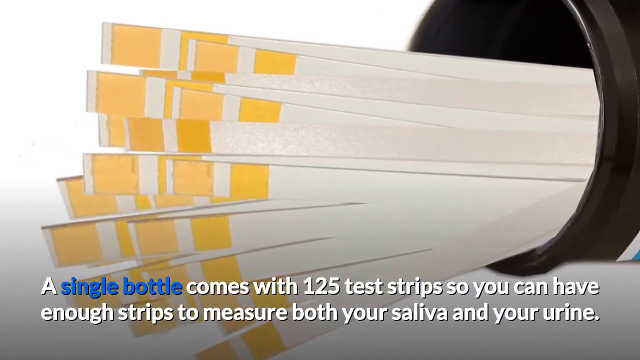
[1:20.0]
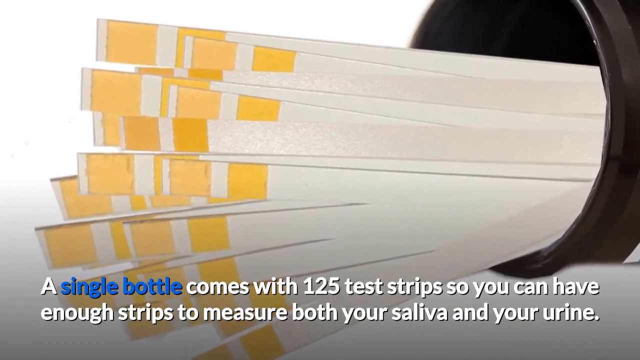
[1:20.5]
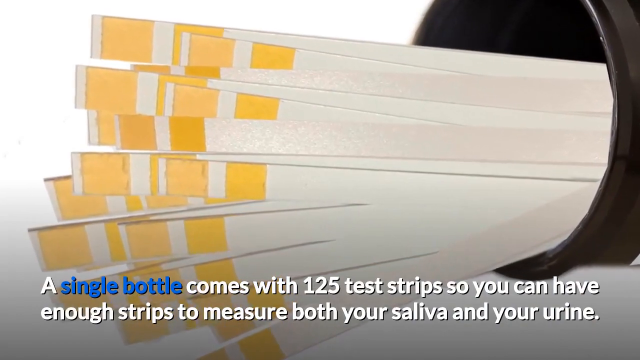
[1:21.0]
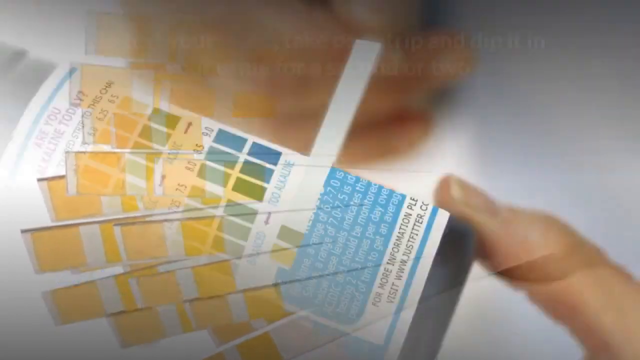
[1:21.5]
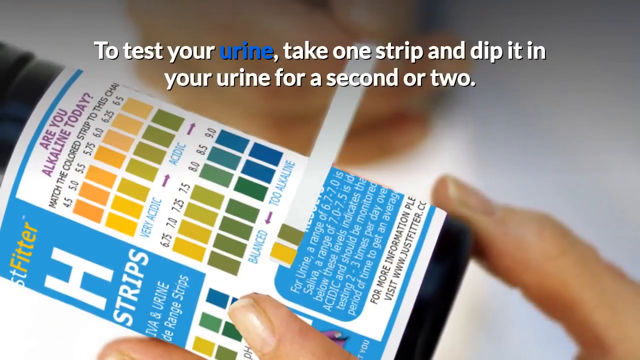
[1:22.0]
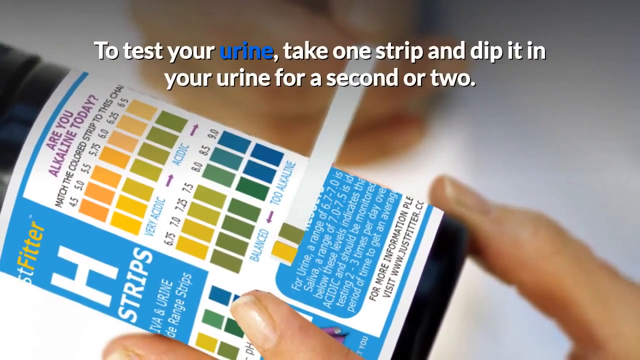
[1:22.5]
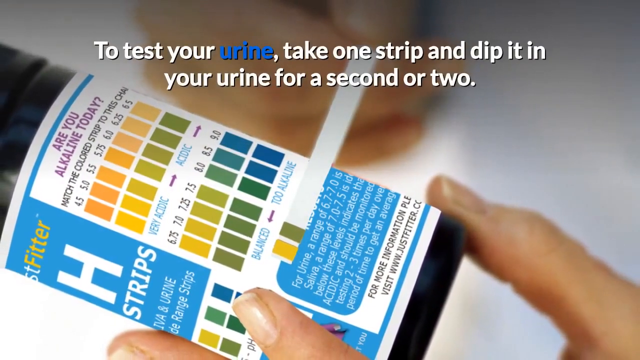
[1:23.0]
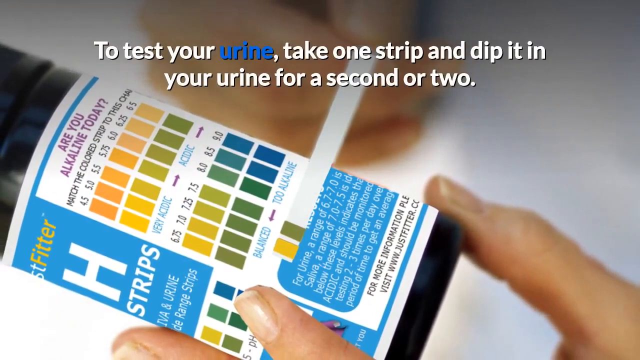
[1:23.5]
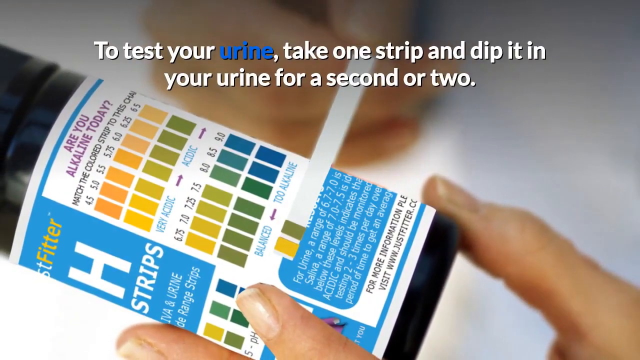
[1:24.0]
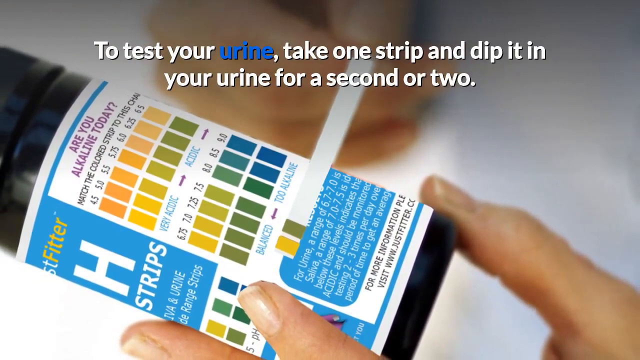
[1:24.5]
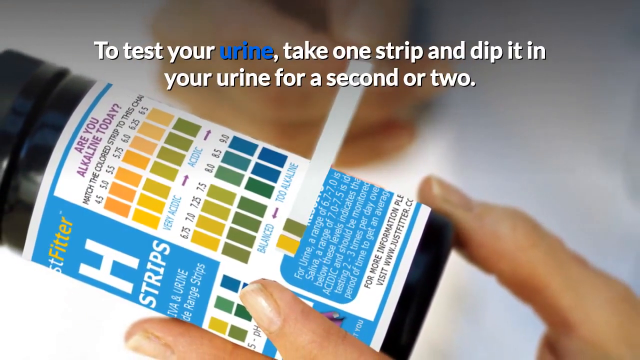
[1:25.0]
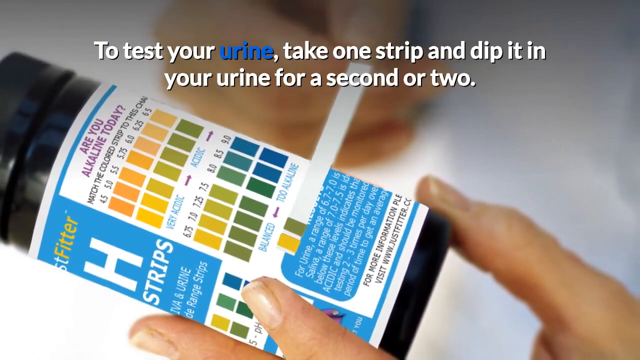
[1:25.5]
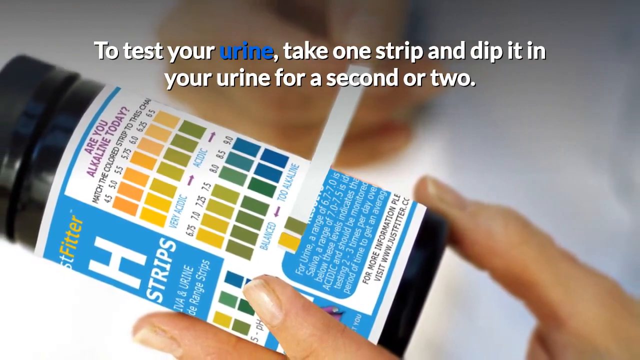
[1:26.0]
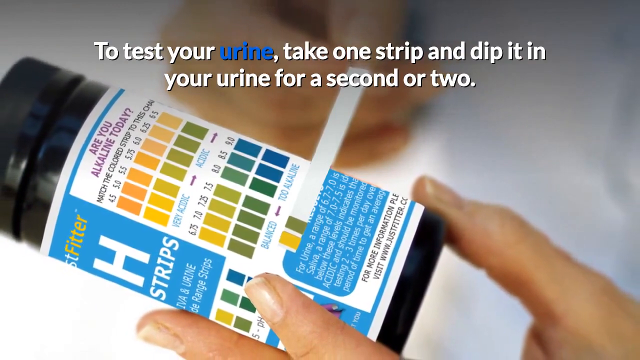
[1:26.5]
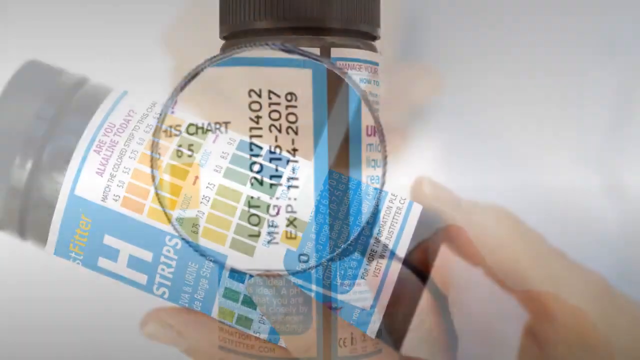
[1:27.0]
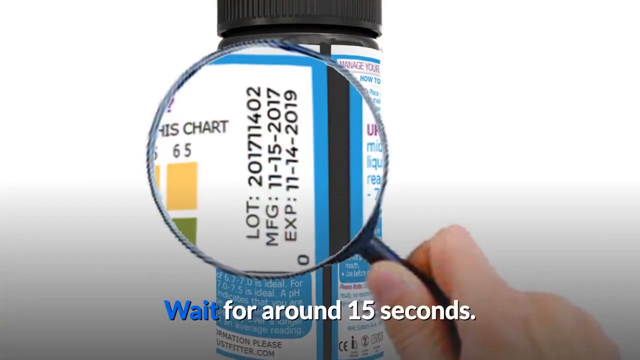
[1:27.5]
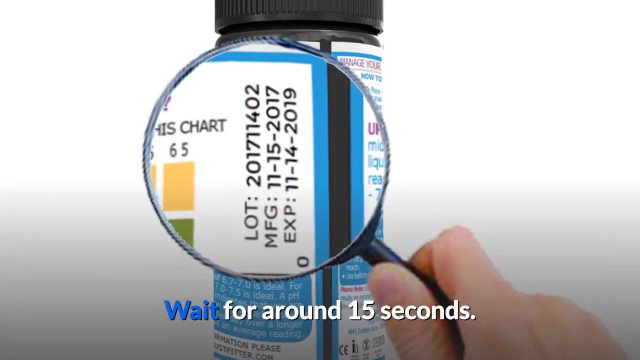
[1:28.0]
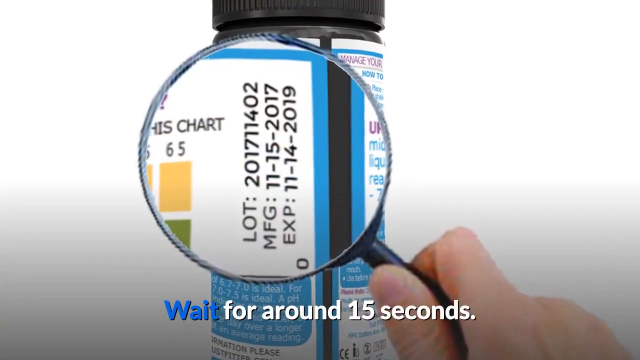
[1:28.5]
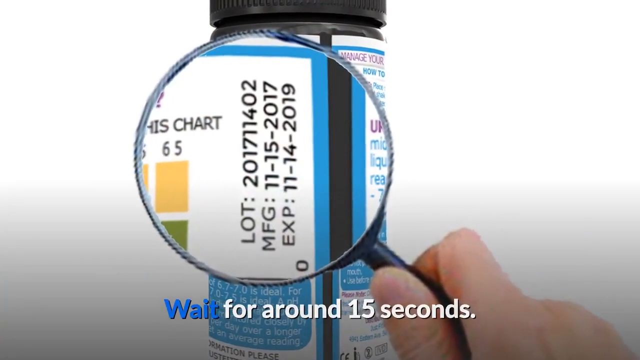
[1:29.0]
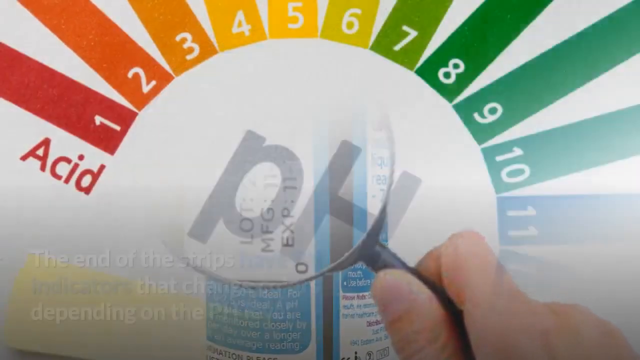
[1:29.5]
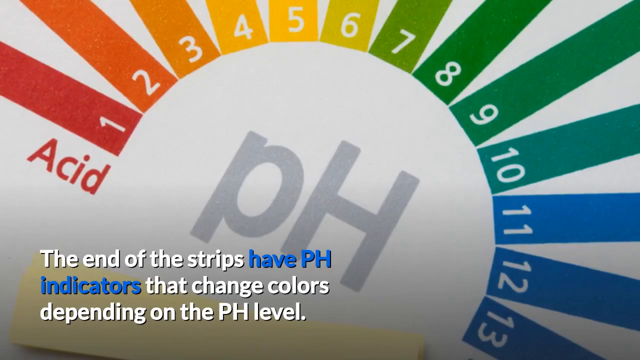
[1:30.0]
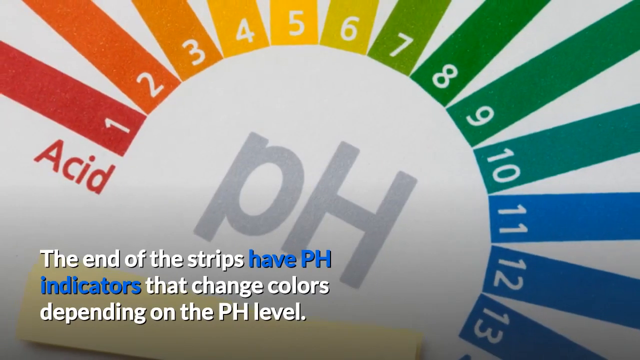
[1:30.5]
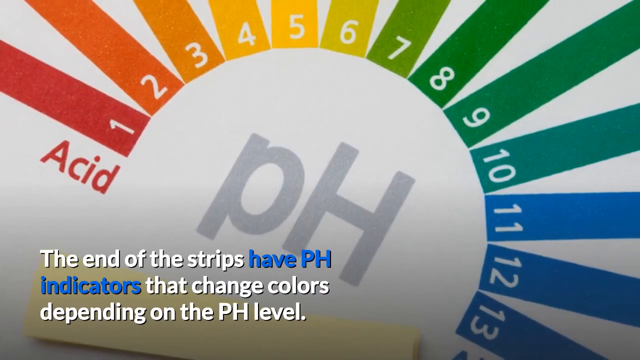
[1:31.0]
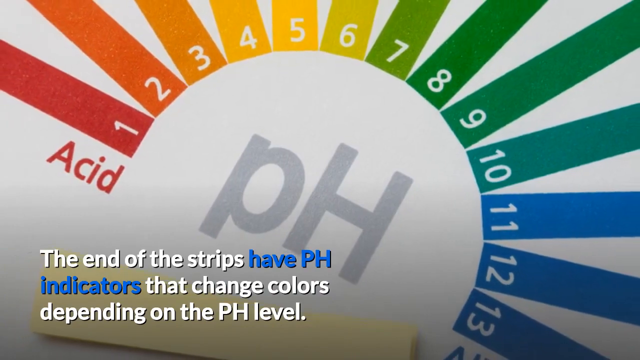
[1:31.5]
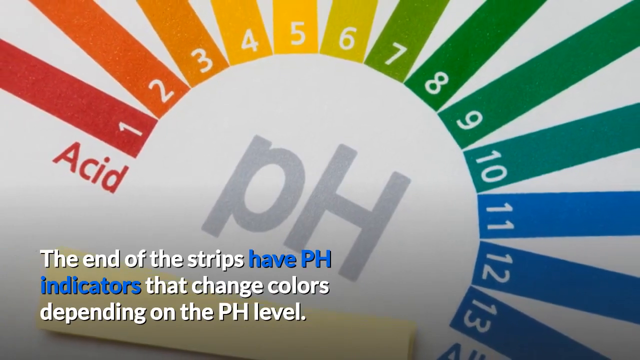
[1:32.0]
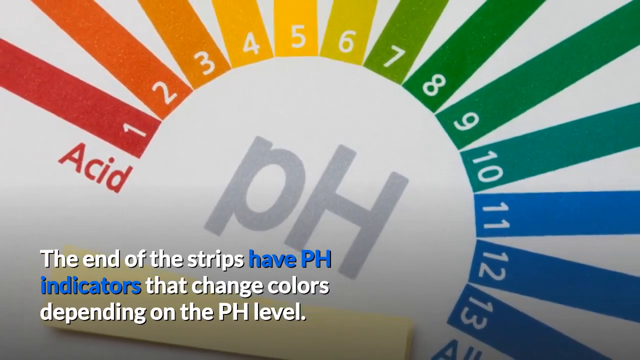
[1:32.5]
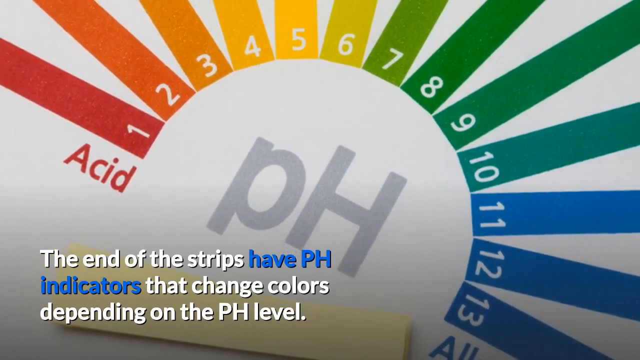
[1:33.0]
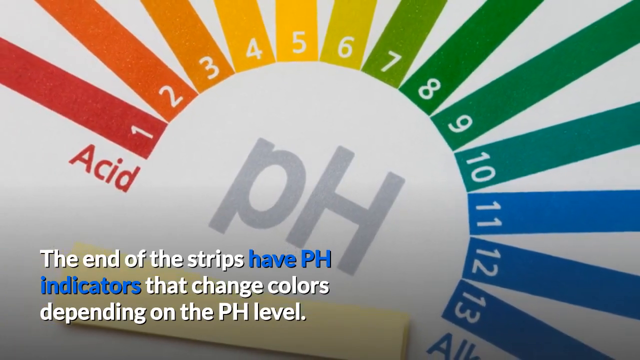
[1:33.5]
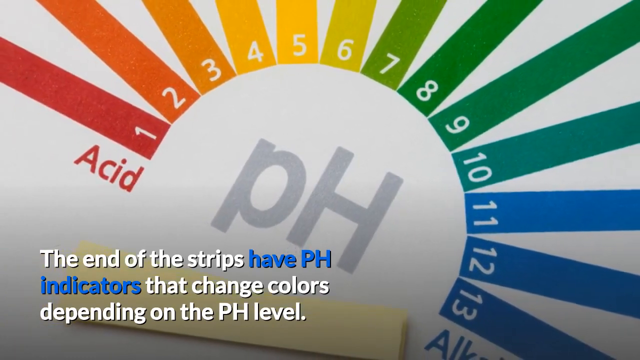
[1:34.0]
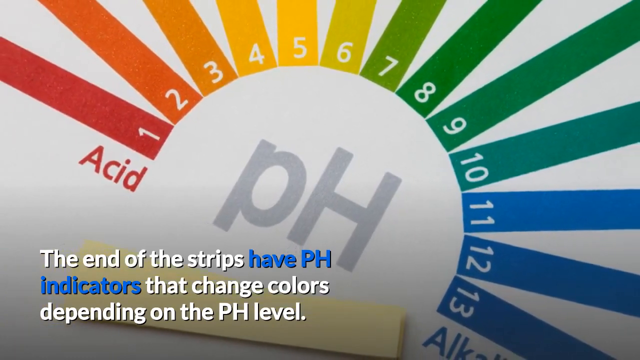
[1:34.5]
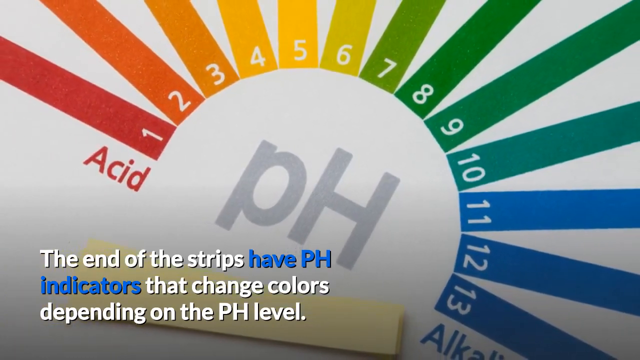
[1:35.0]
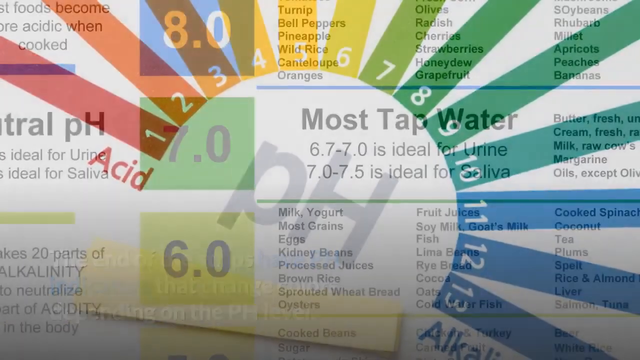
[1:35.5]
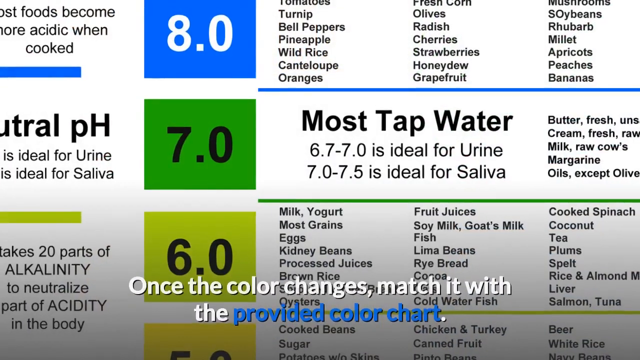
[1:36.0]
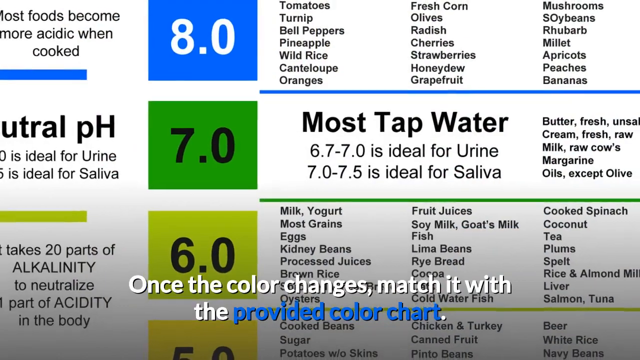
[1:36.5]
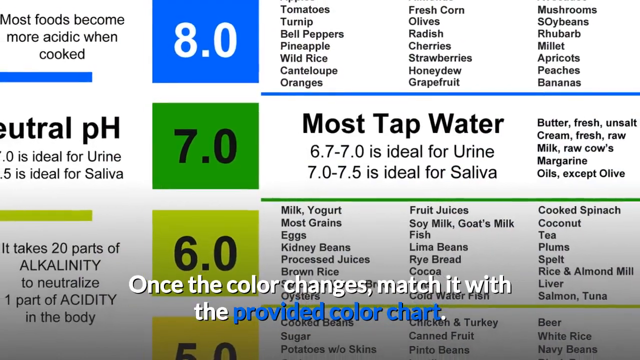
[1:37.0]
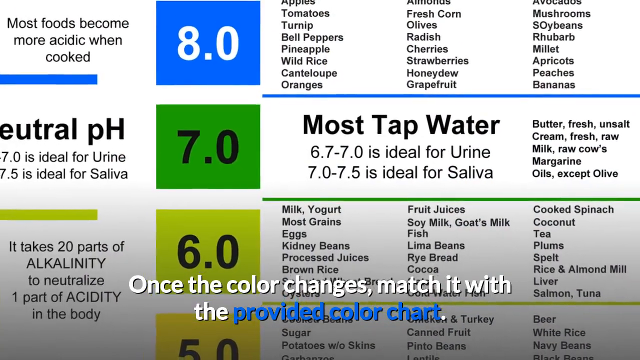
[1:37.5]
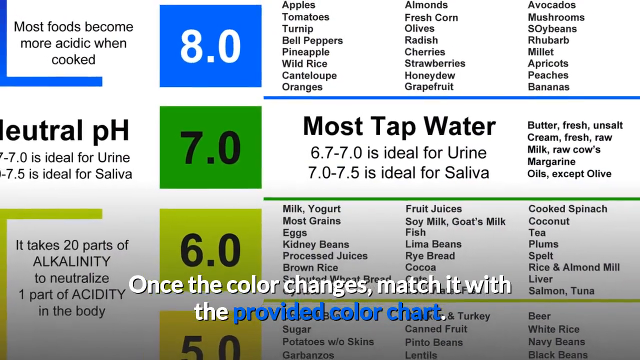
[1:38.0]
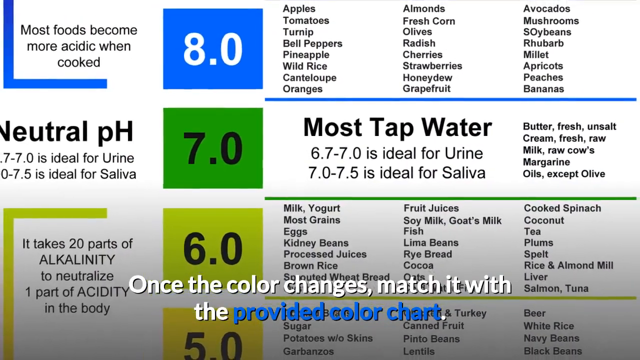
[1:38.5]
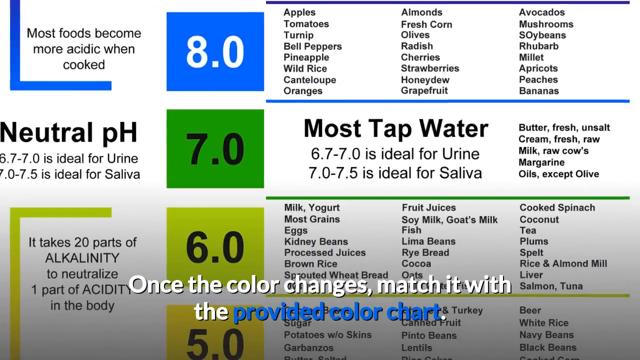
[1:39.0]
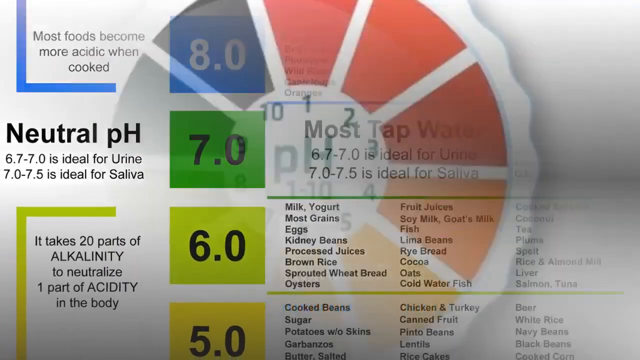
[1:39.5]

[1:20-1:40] Text reads "using pH test strips can then indicate if your body is leaning towards being acidic or alkaline." The video cuts to an image of the black bottle opened, showing the white pH test strips, whose ends have two yellow boxes on them. Text reads "a single bottle comes with 125 test strips so you can have enough strips to measure both your saliva and your urine," with "a single bottle" written in blue. It then cuts to a picture of the back of the pH bottle showing many different colors and the words "are you alkaline today? Match the colored strip with this." A caption at the top of the screen reads "to test your urine, take one strip and dip it in your urine for a second or two." In the image, someone holds one of the strips in their right hand and compares its colors with those on the back of the bottle.